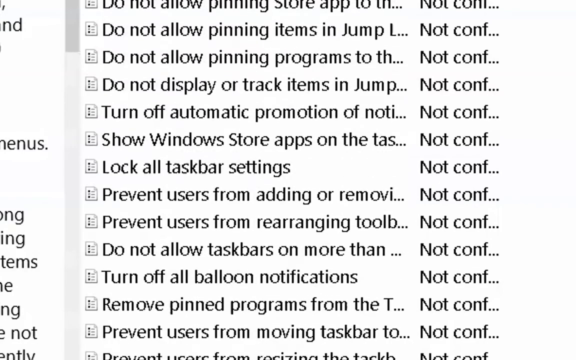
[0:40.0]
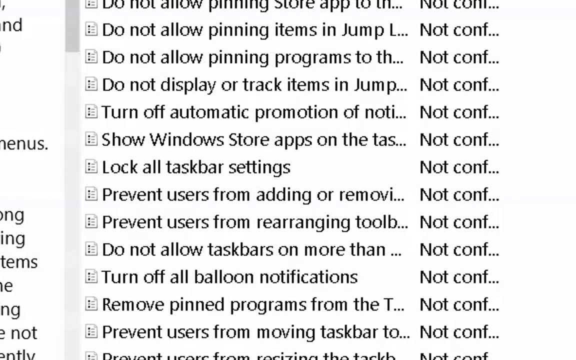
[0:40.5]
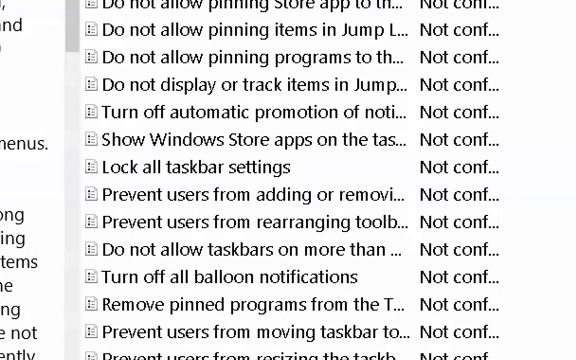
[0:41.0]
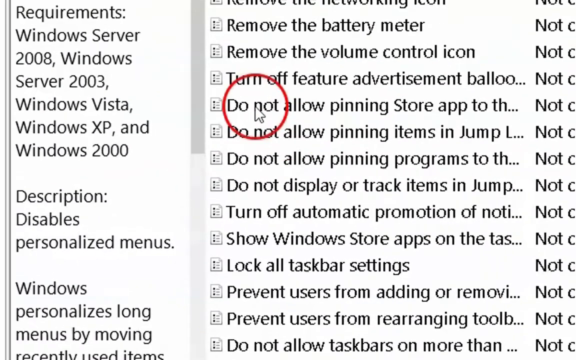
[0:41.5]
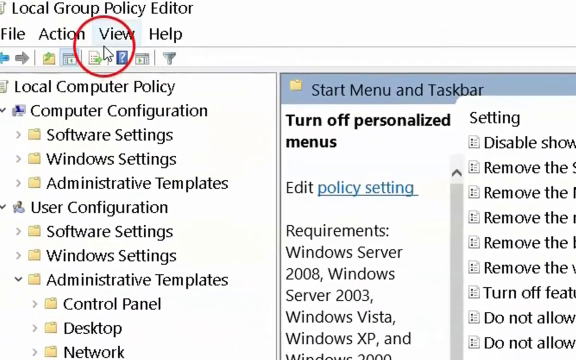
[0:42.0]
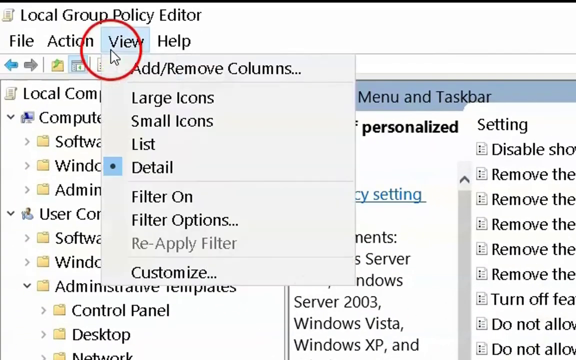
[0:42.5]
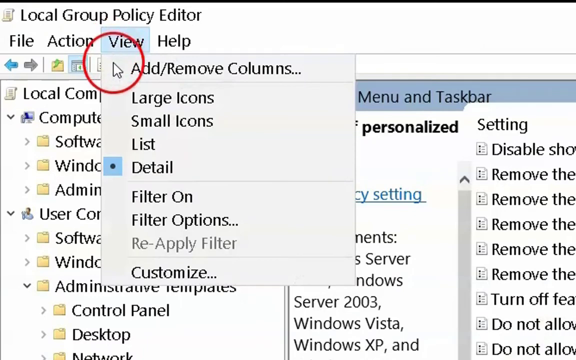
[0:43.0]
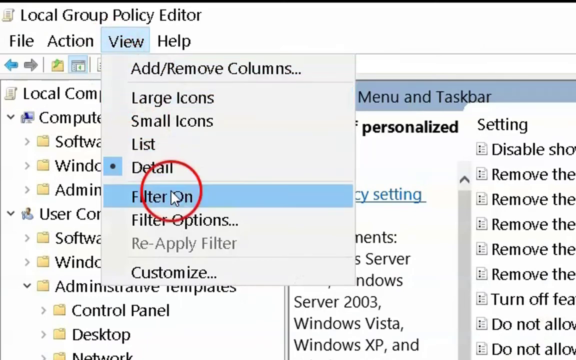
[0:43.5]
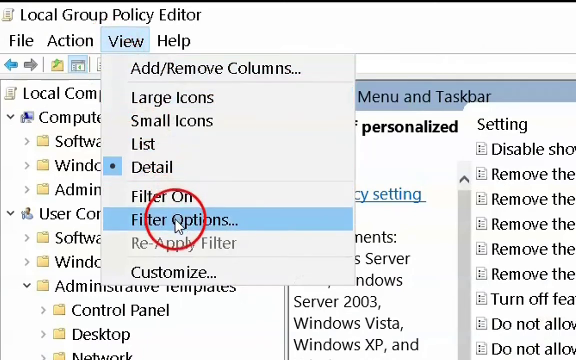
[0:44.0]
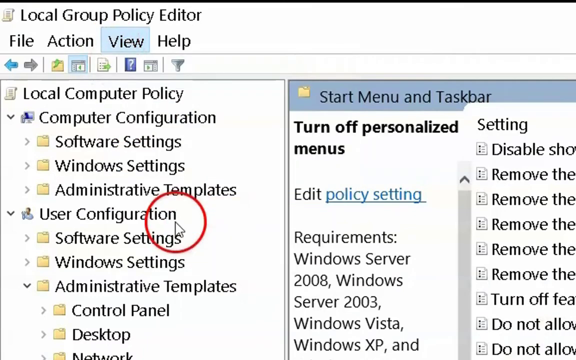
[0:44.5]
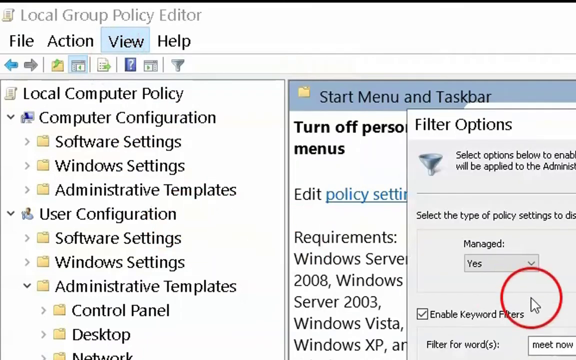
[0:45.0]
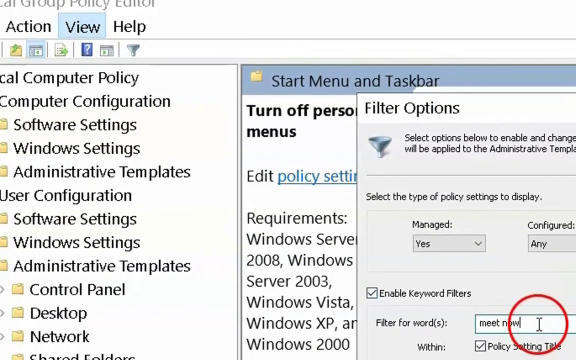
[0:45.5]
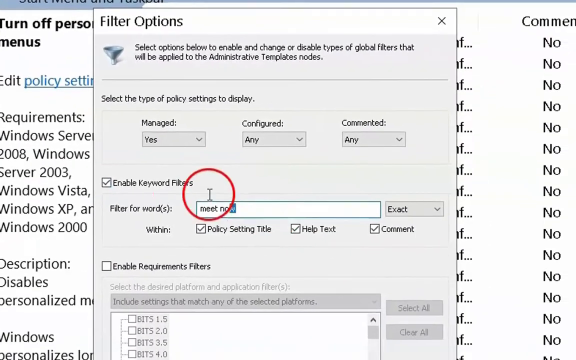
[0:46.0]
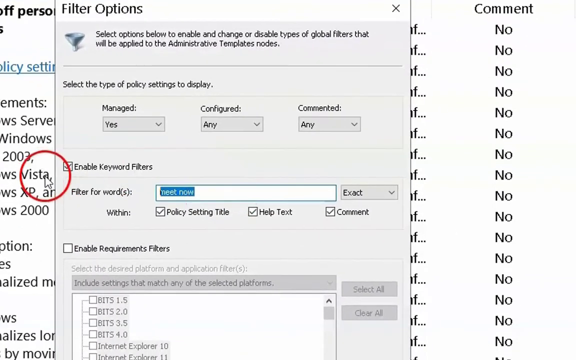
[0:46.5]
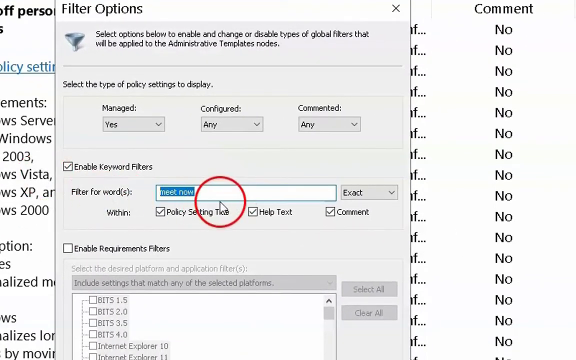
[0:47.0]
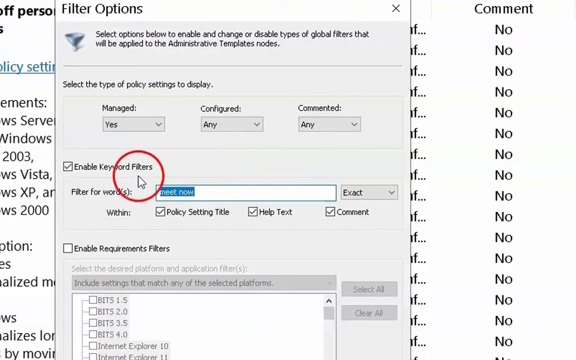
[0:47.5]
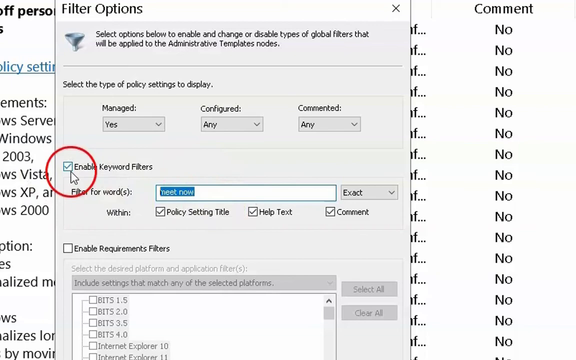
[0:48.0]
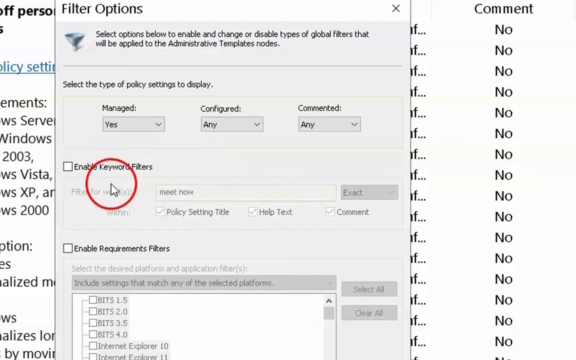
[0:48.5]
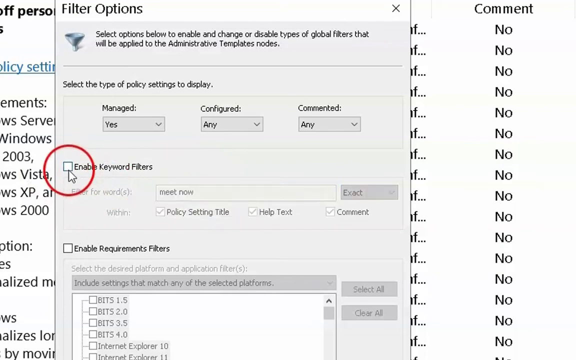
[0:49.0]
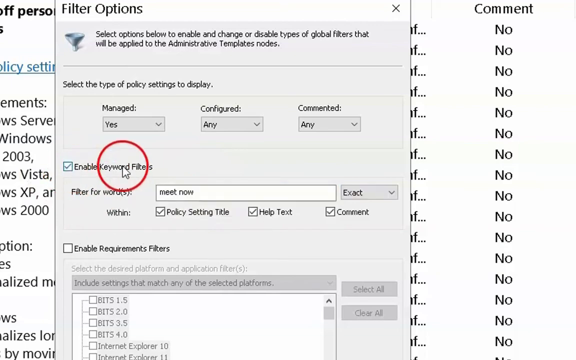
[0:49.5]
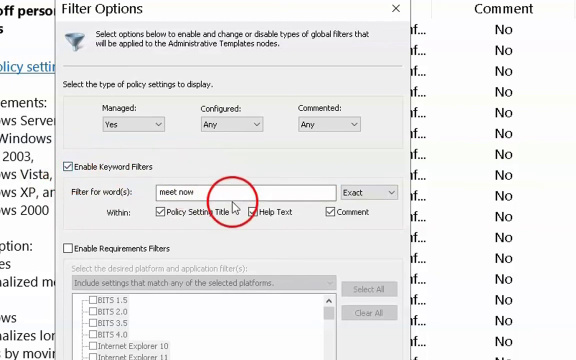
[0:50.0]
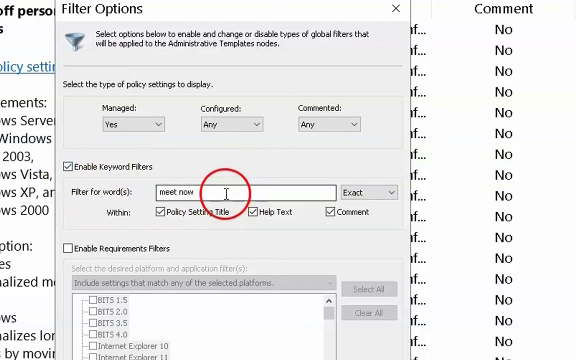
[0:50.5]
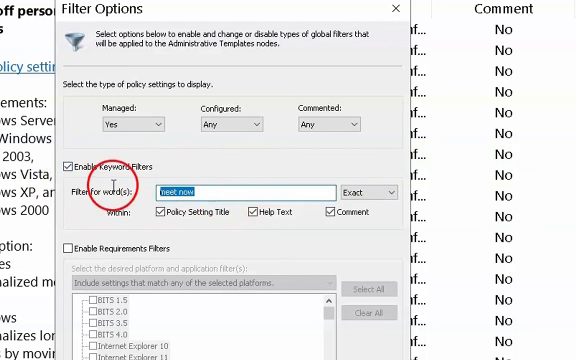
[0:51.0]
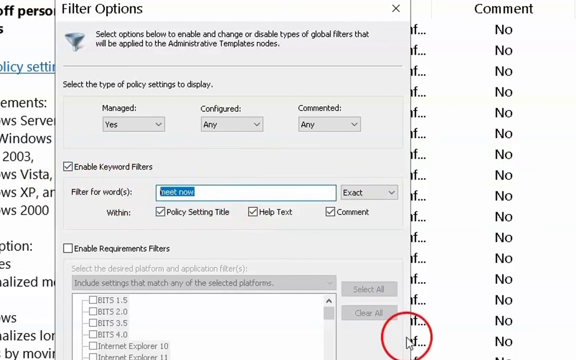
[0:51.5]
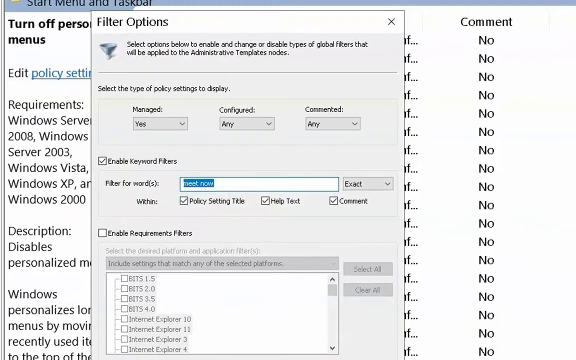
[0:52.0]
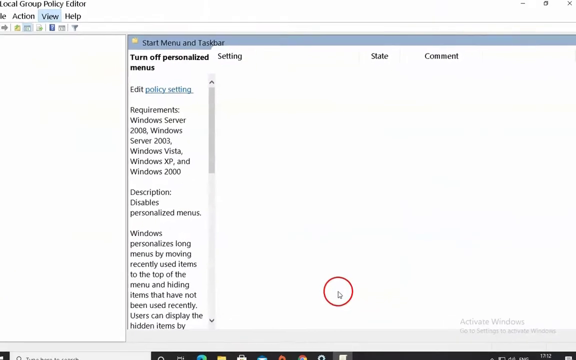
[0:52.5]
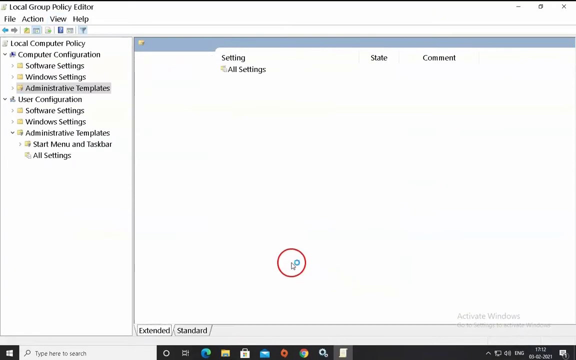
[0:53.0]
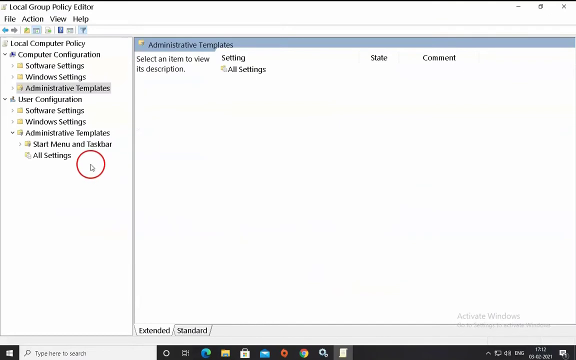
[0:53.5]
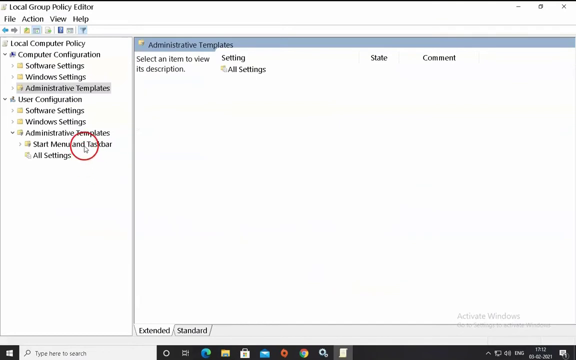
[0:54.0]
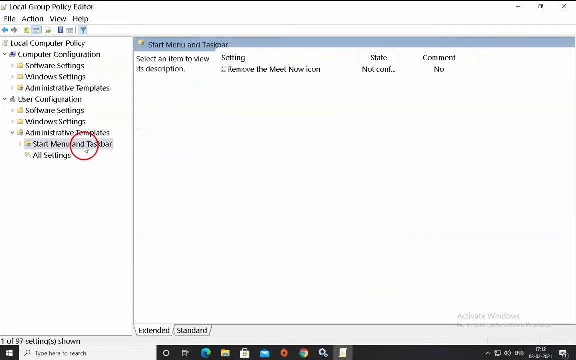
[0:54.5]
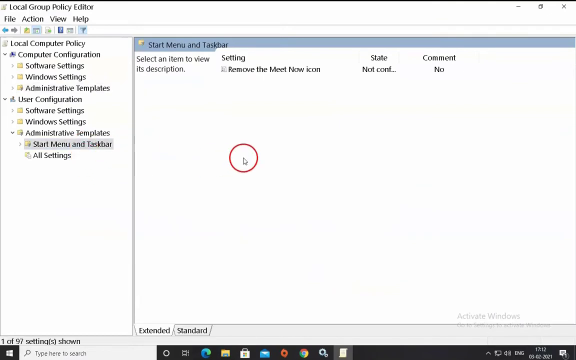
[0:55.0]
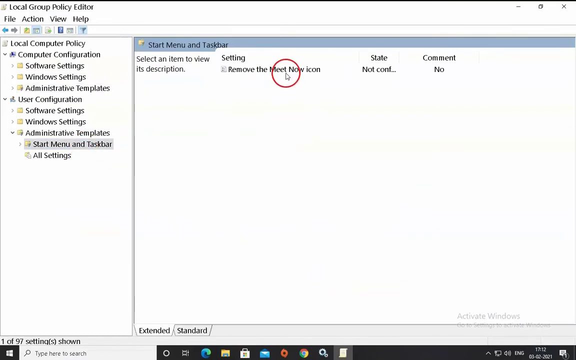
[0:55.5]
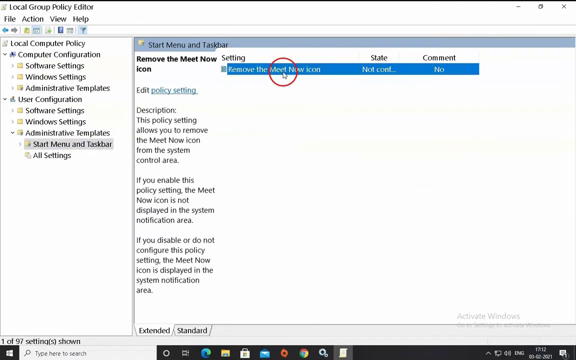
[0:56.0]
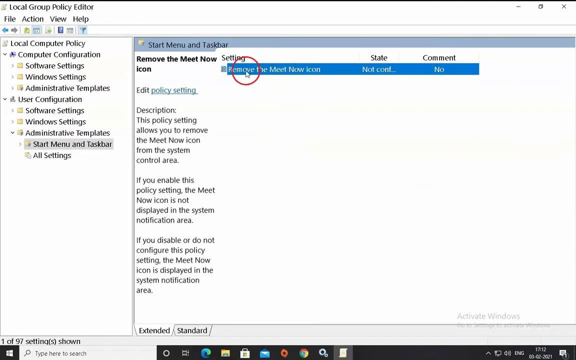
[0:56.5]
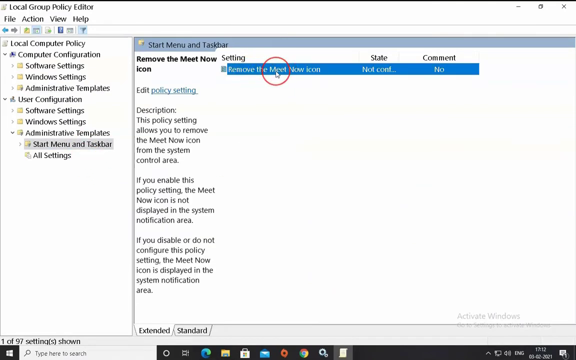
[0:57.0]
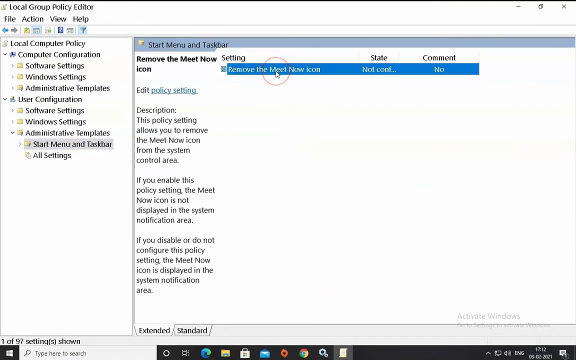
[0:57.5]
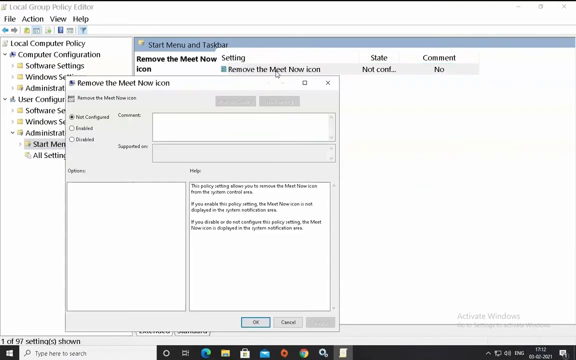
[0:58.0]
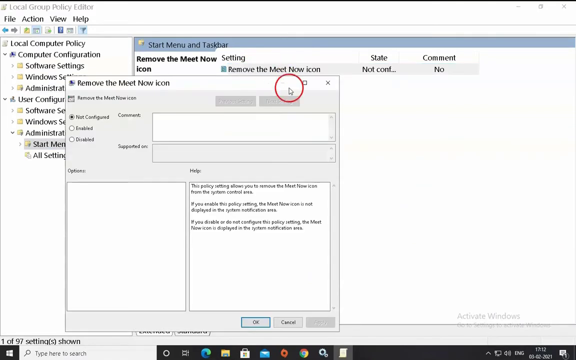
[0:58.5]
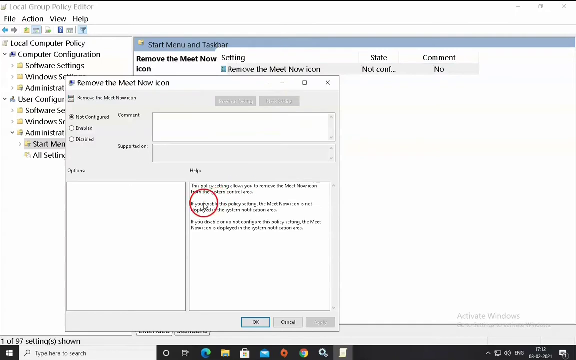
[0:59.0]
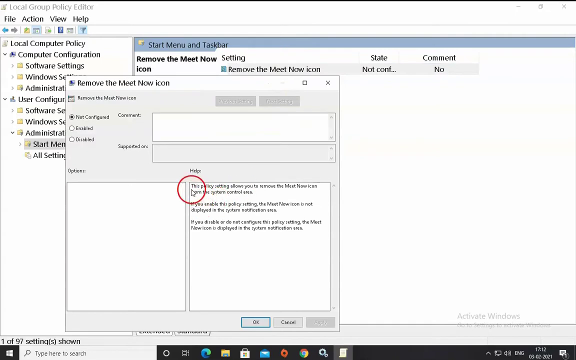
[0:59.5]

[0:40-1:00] The computer screen shows someone who appears to be actively working. A pointer with a red circle around it moves very quickly. The list on screen includes "Remove the Meet Now icon," "Do not display or track items in Jump," "Filter options," "Prevent users from rearranging toolbar," and "Turn off automatic promotion," and the items are all non-configured. It looks like they may be making some type of program. There are no people, only the computer screen and a lot of words.